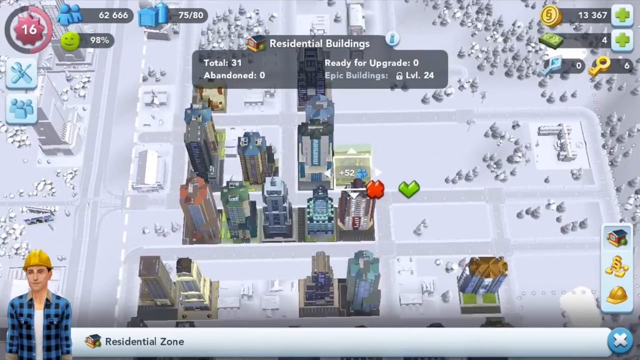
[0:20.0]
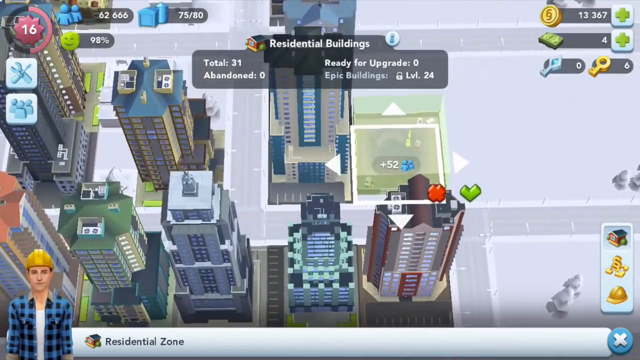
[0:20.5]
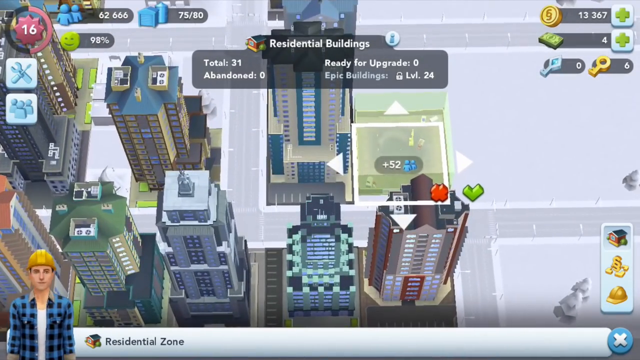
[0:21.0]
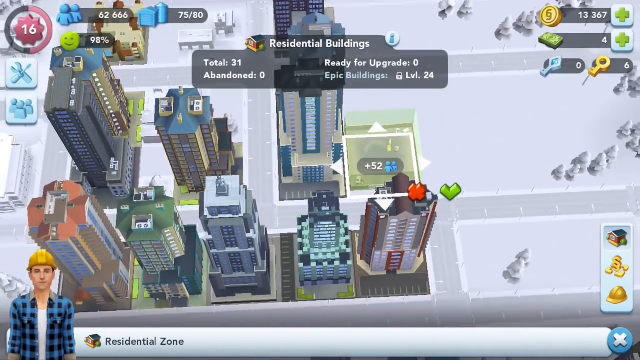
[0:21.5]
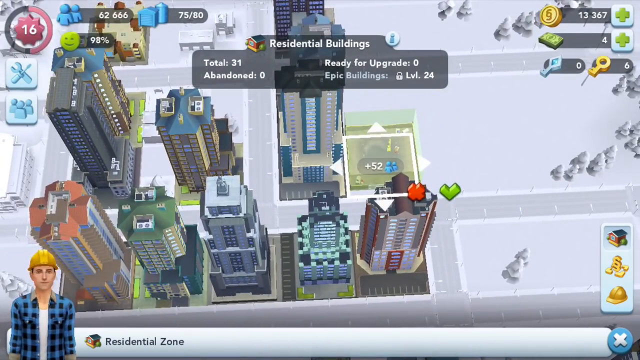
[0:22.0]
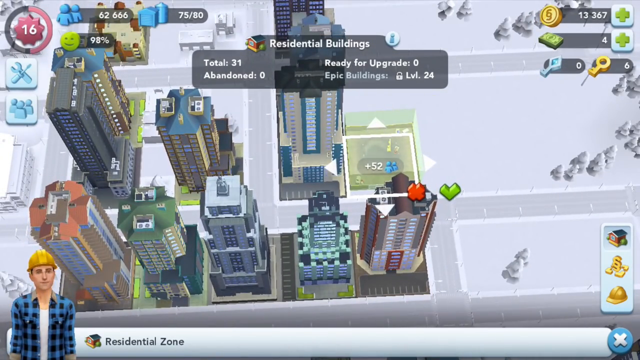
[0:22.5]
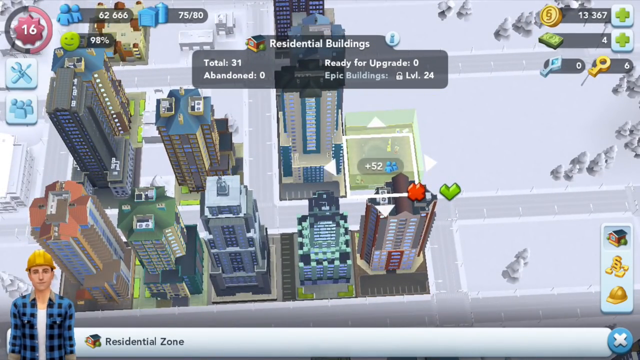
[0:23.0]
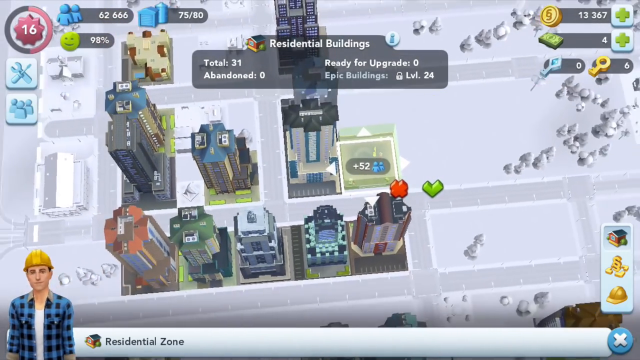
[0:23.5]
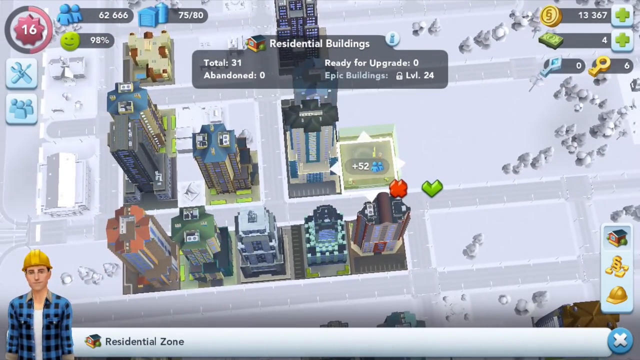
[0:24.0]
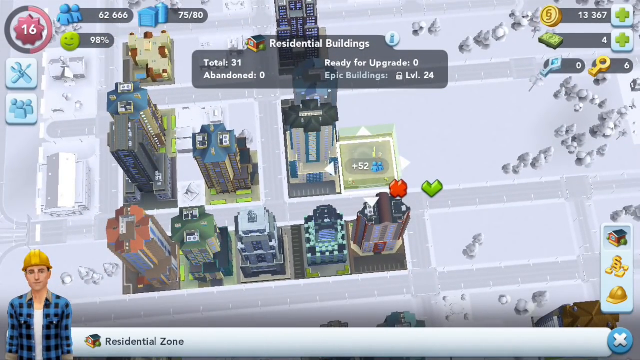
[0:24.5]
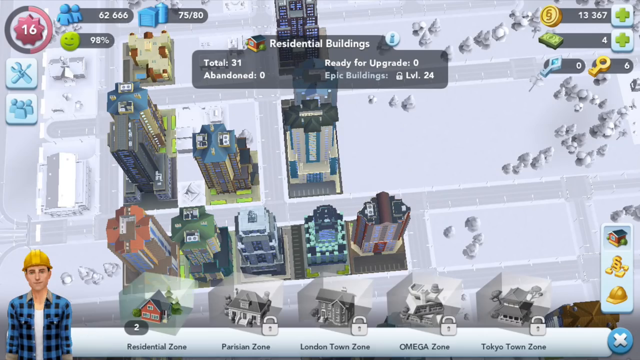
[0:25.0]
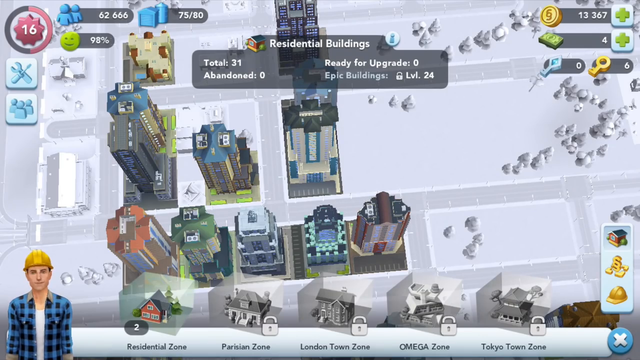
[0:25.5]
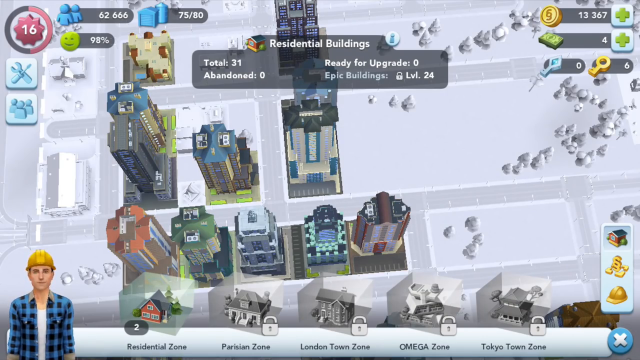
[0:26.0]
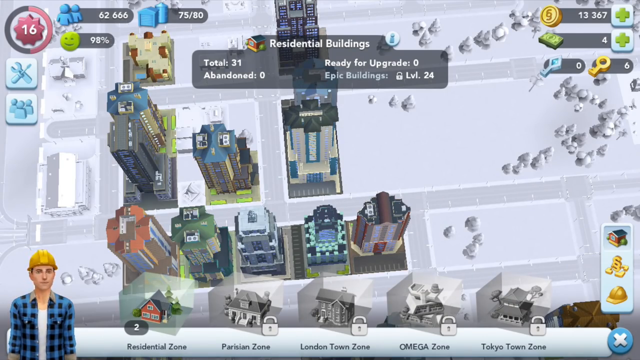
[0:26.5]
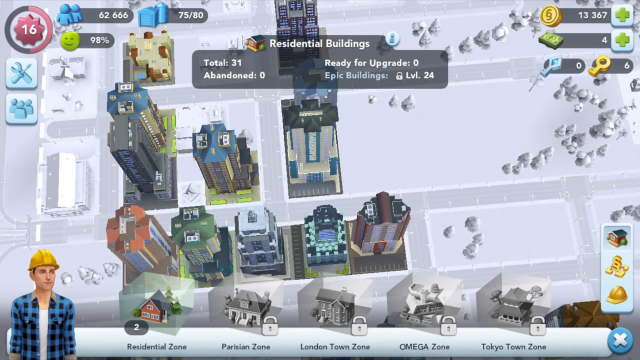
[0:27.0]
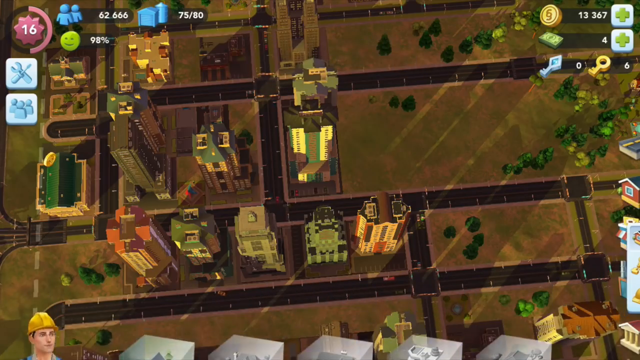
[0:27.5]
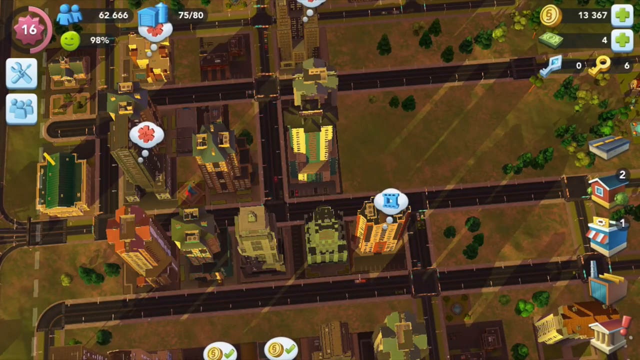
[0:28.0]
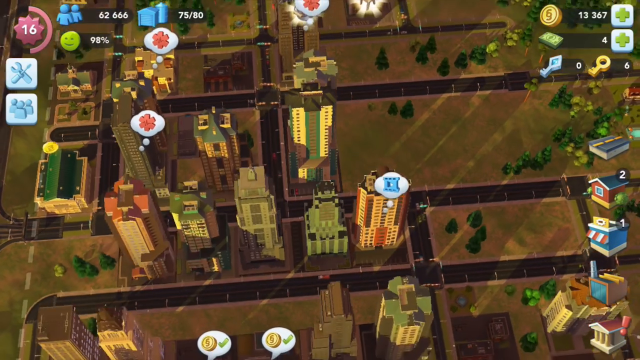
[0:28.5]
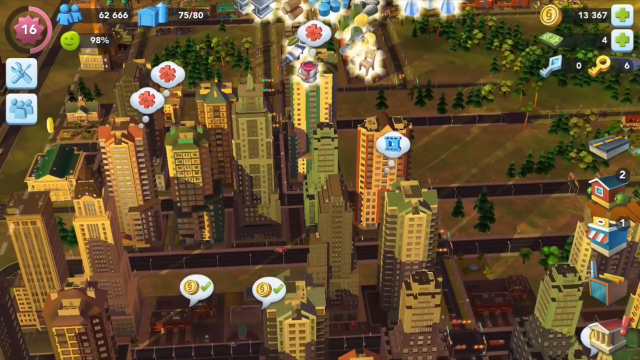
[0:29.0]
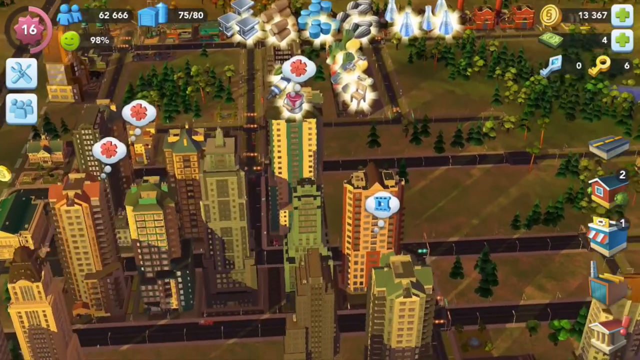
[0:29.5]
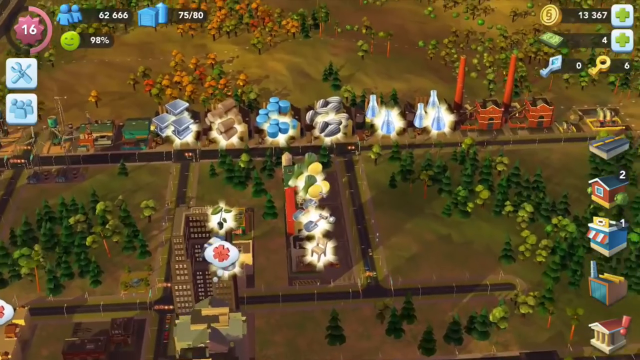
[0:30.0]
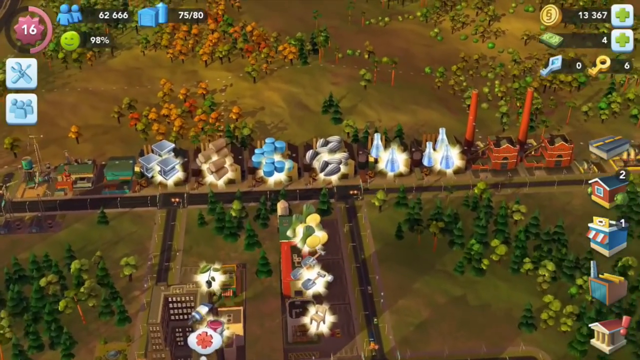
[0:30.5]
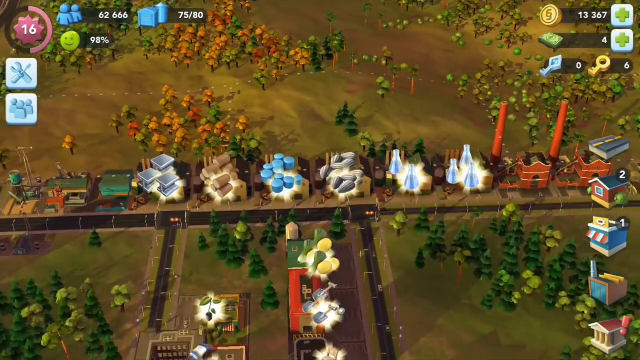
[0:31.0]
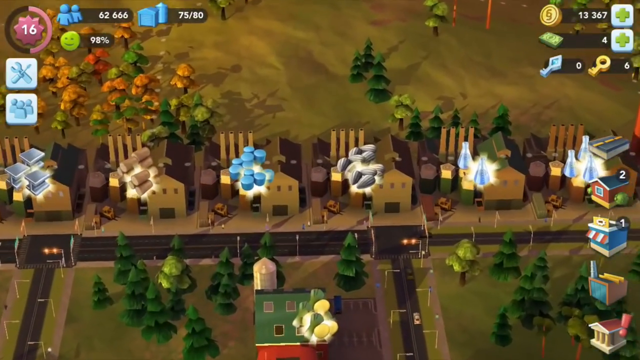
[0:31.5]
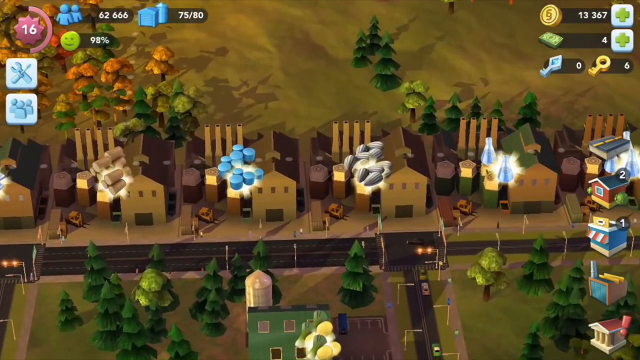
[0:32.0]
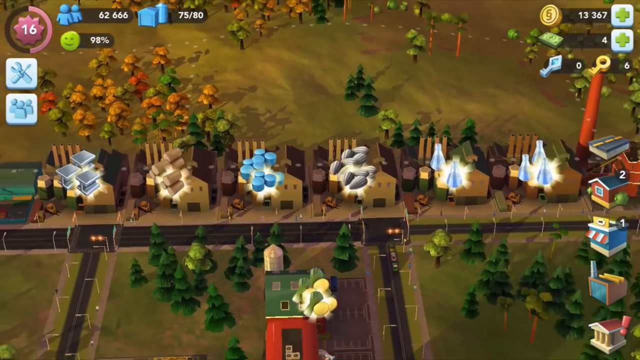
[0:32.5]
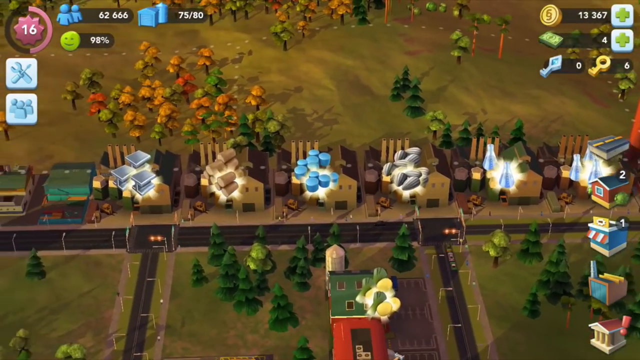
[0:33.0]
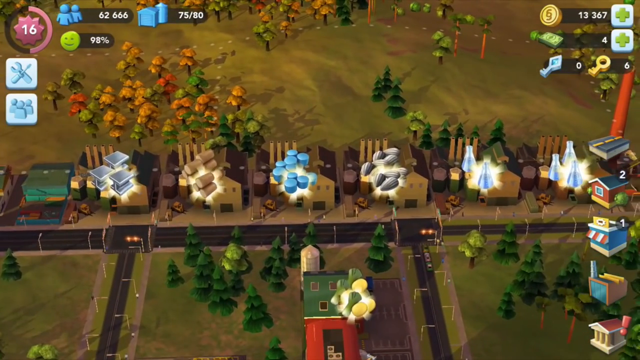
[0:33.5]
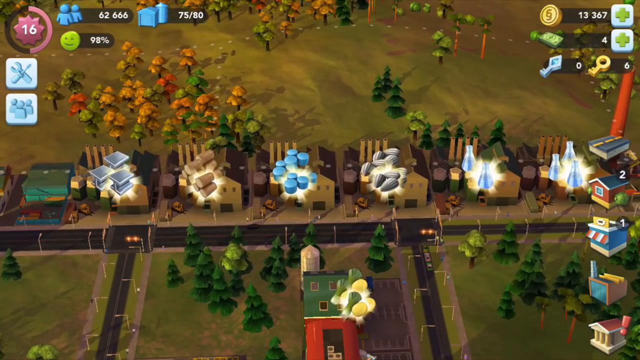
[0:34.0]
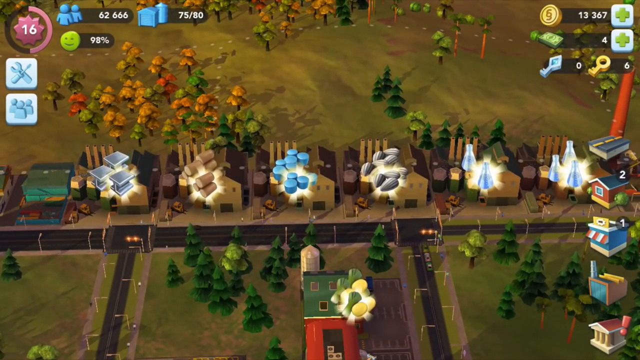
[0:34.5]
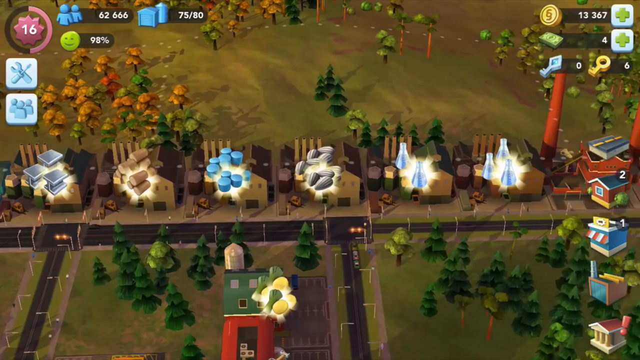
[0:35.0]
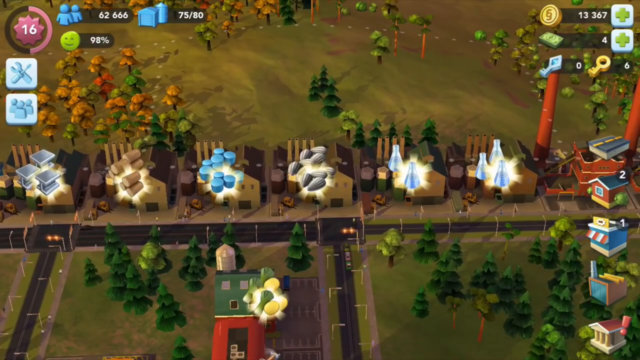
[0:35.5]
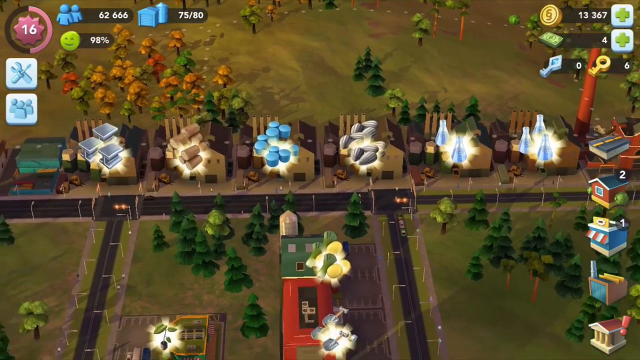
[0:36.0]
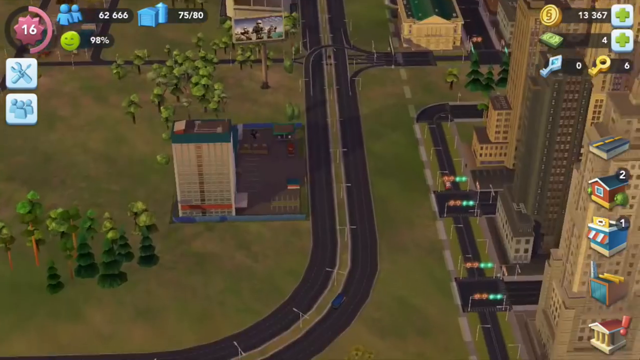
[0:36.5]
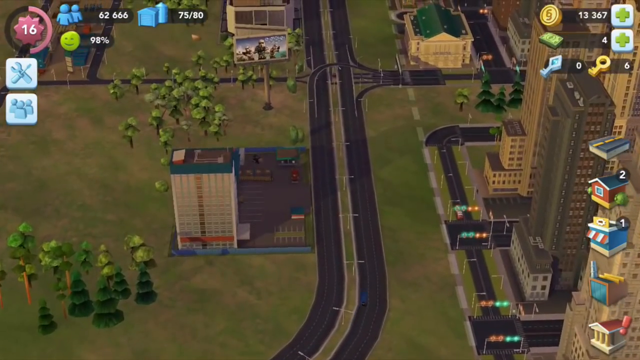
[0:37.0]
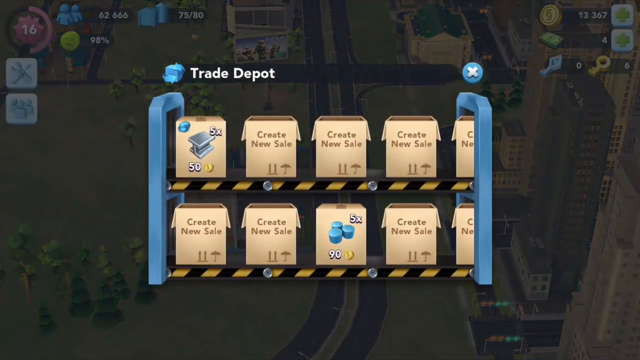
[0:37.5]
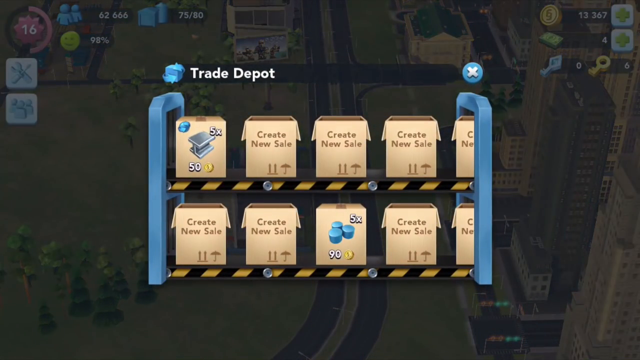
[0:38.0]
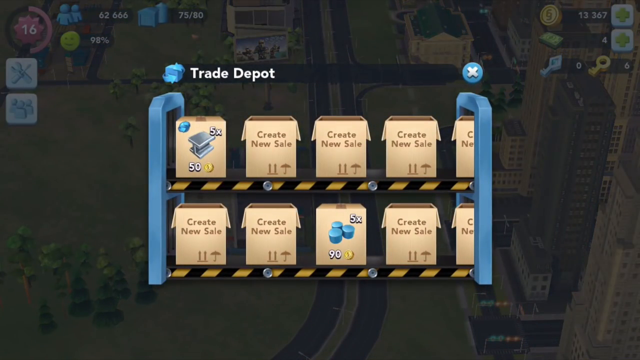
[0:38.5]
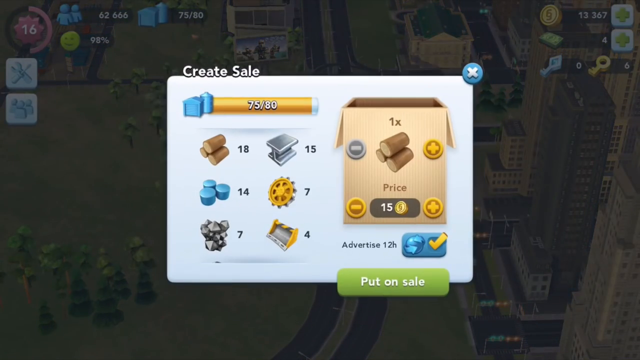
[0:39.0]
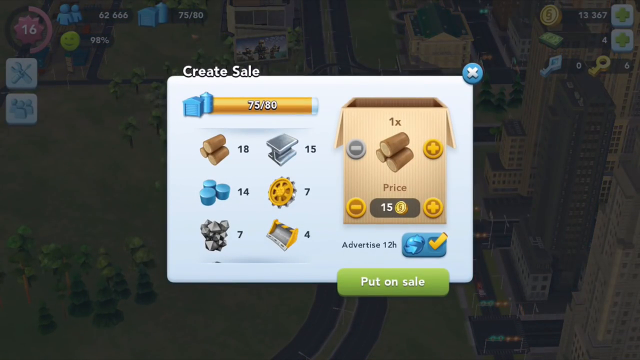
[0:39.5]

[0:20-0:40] The person in the bottom left corner appears to be a white male with no facial hair, seemingly wearing a bluish flannel shirt and a construction worker's hat. Only his upper body is visible, not his legs; he moves slightly, but his lips are not seen moving. The camera pans around to certain areas of the game, and one is highlighted with a panel reading "residential buildings", "total 31", "abandoned zero", "ready for upgrade zero", "epic buildings", a lock sign, and "level 24". An area is clicked, the panel disappears, and the view pans out to show the city. A few buildings have icons floating slightly above them that look like cogs. The view zooms in on other icons that look like resources, such as steel, wood, and possibly glass or some kind of chemical; they float up and down. Then what seems to be the trade depot and the create sale windows pop up one after another, showing various icons.